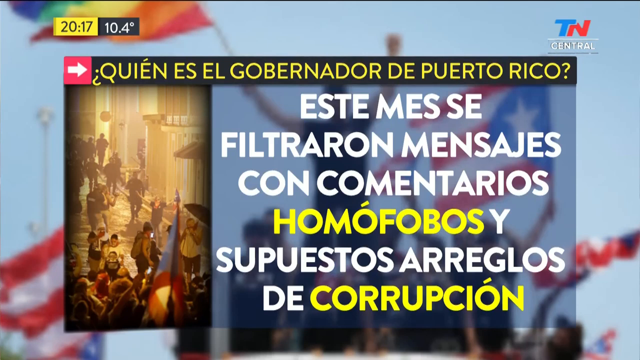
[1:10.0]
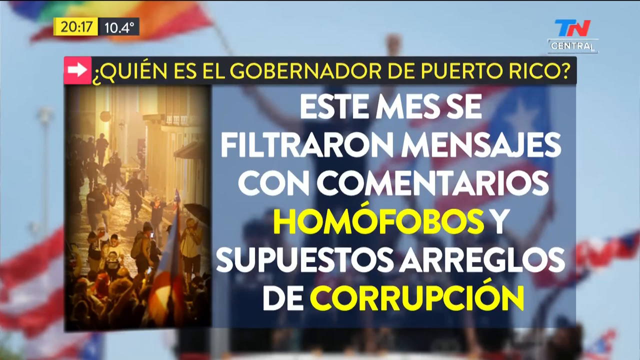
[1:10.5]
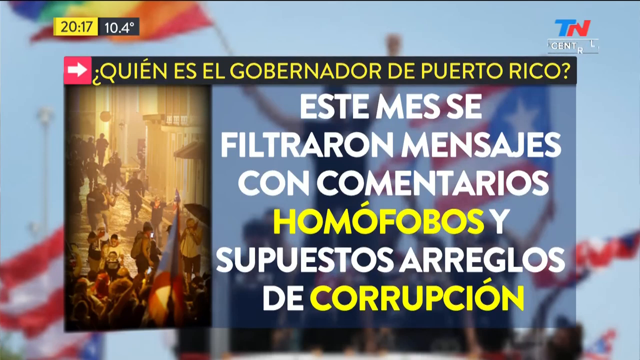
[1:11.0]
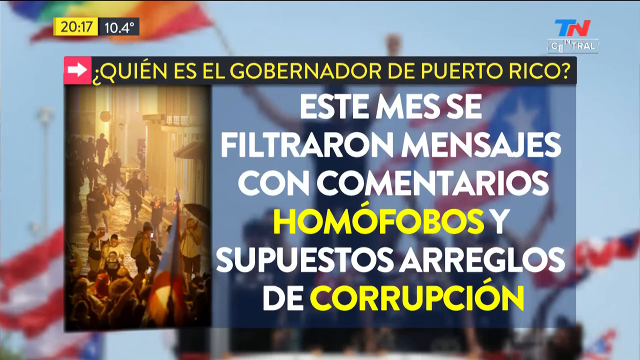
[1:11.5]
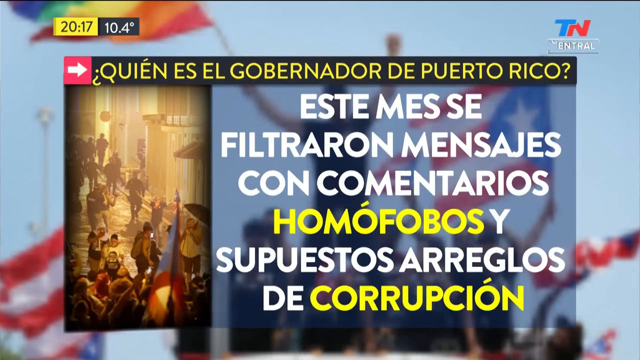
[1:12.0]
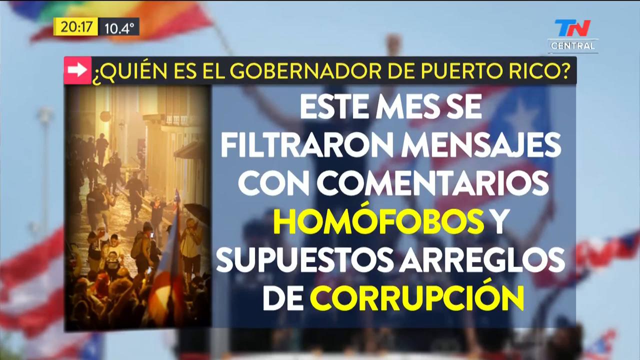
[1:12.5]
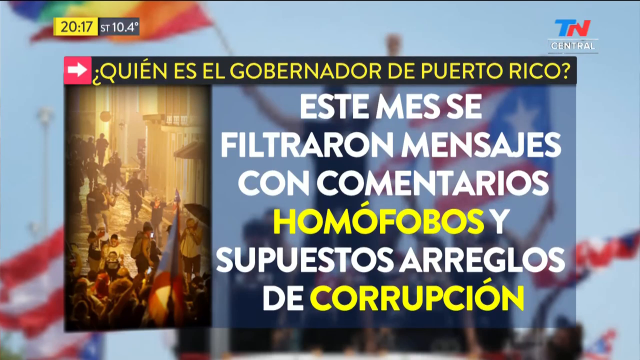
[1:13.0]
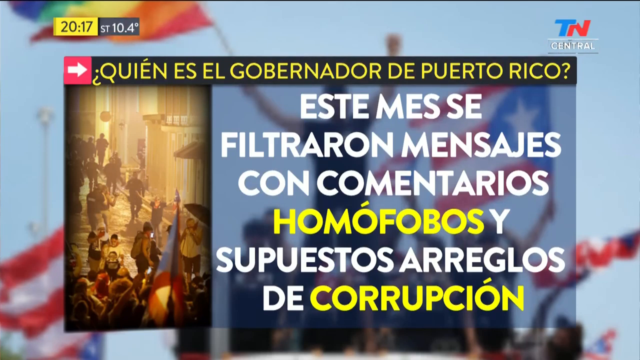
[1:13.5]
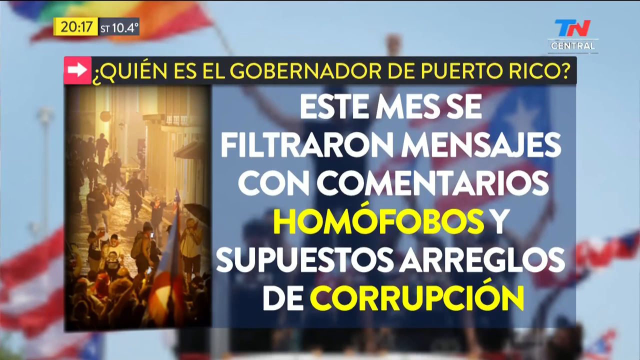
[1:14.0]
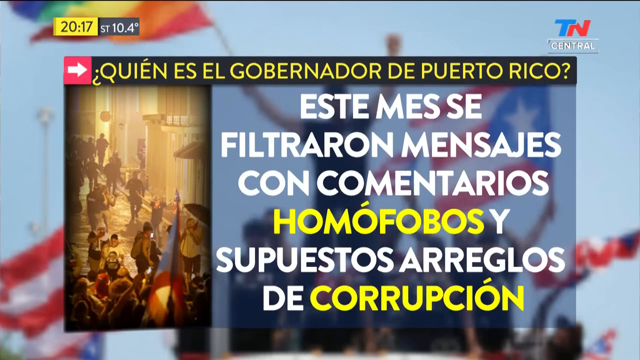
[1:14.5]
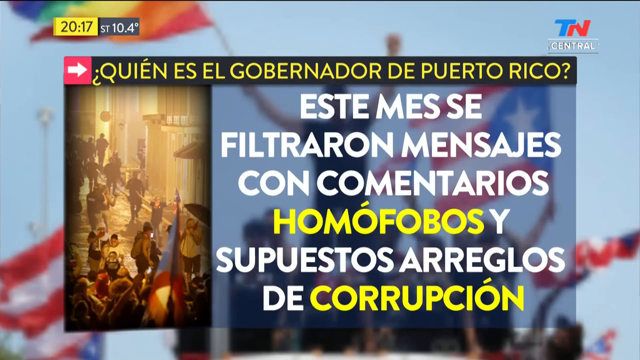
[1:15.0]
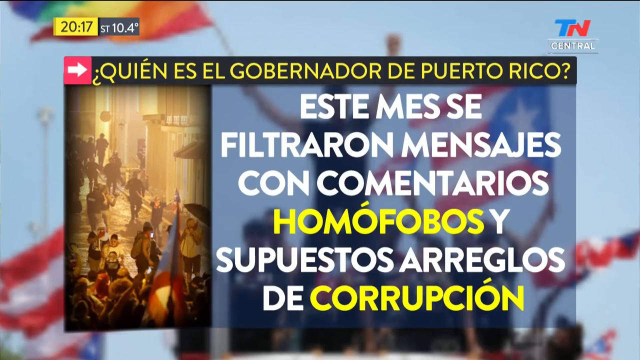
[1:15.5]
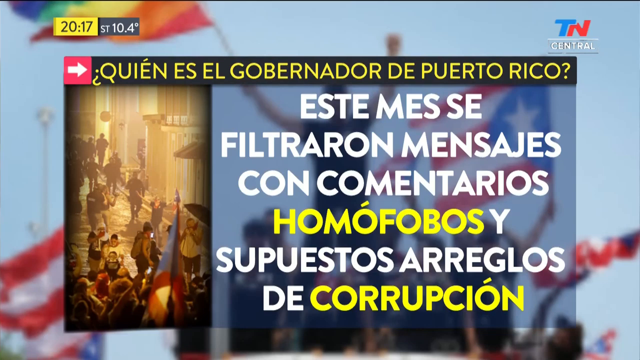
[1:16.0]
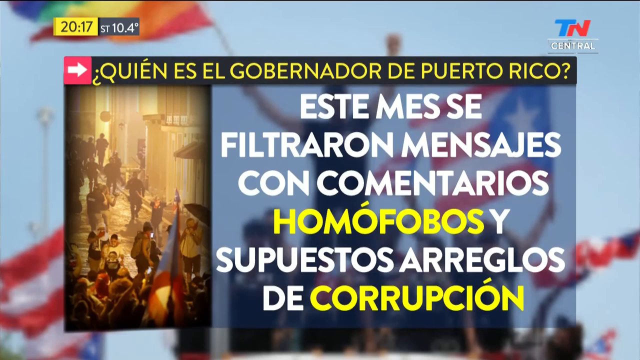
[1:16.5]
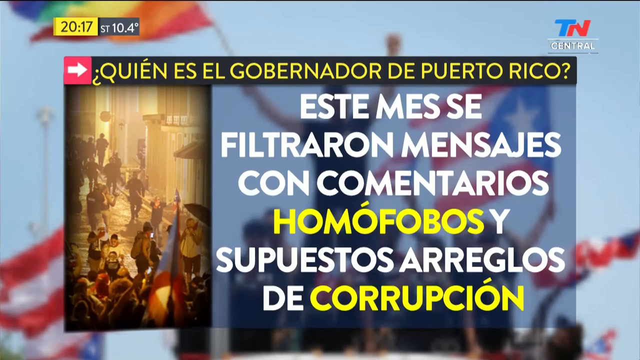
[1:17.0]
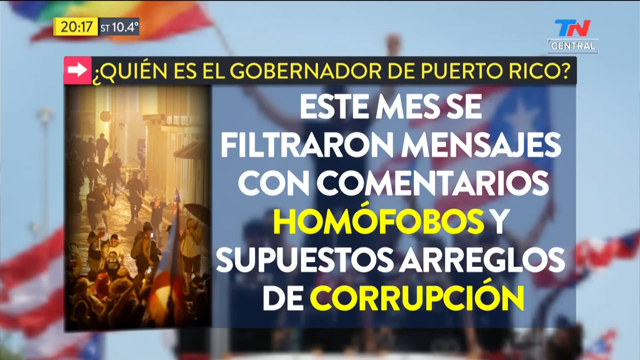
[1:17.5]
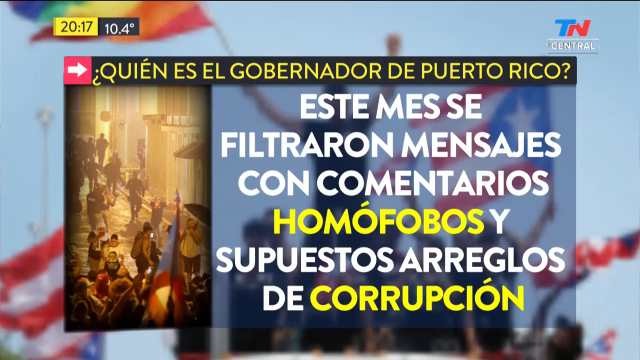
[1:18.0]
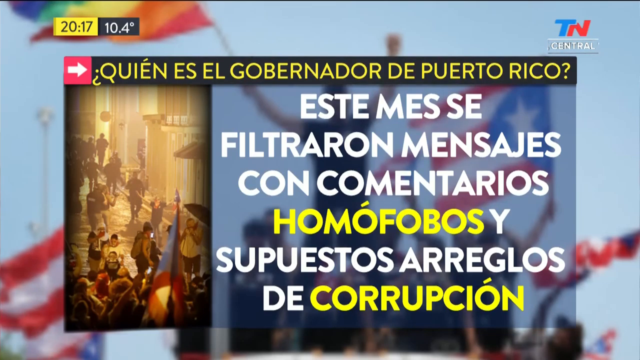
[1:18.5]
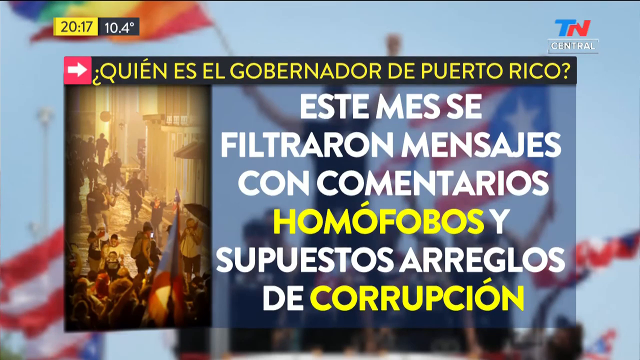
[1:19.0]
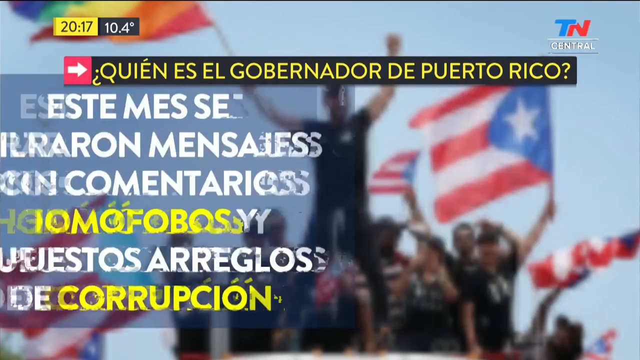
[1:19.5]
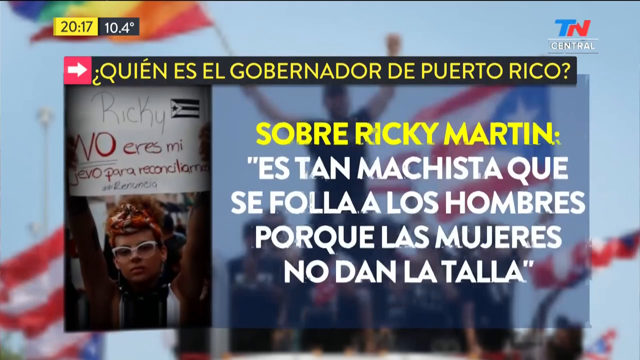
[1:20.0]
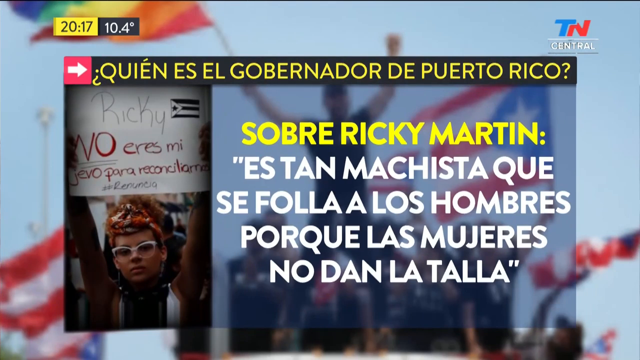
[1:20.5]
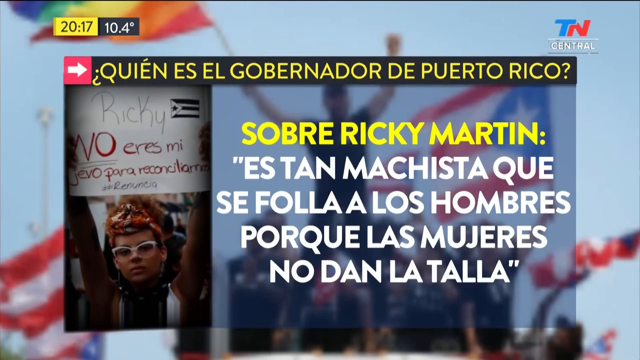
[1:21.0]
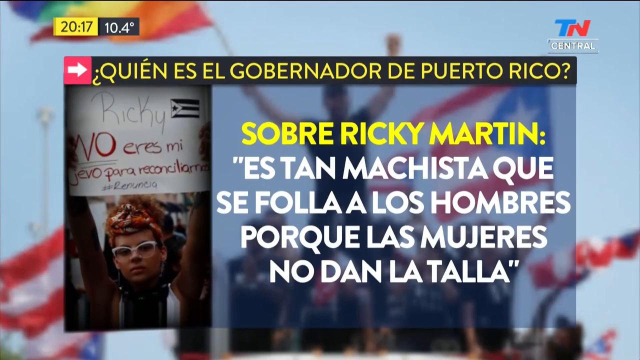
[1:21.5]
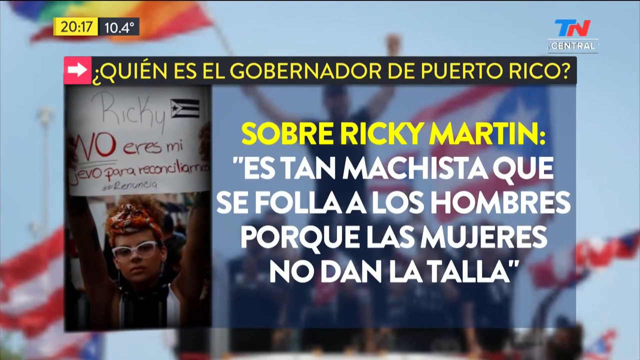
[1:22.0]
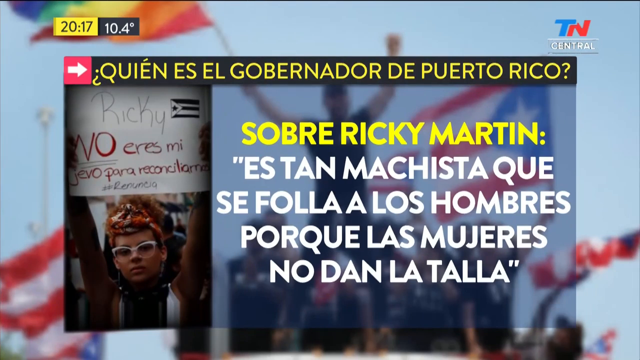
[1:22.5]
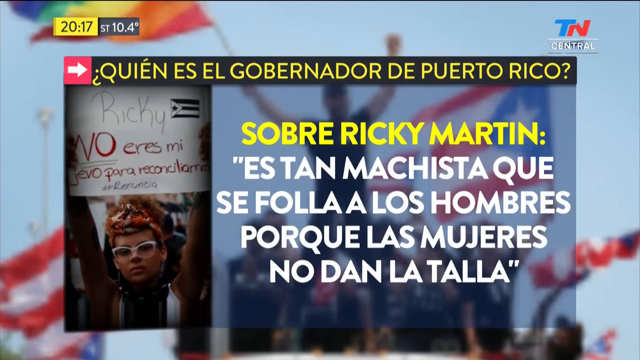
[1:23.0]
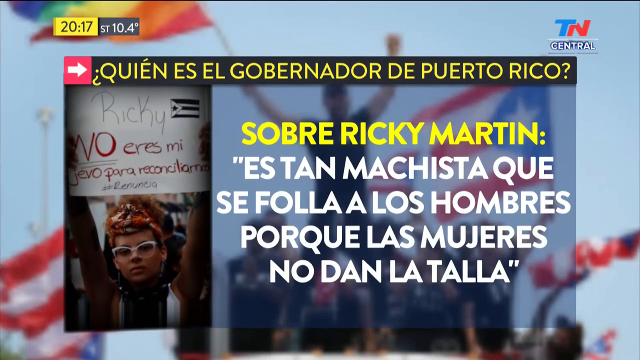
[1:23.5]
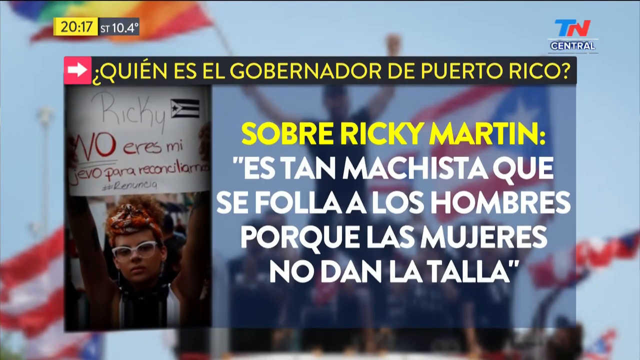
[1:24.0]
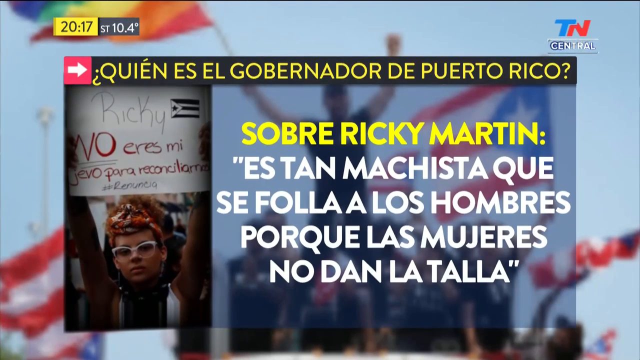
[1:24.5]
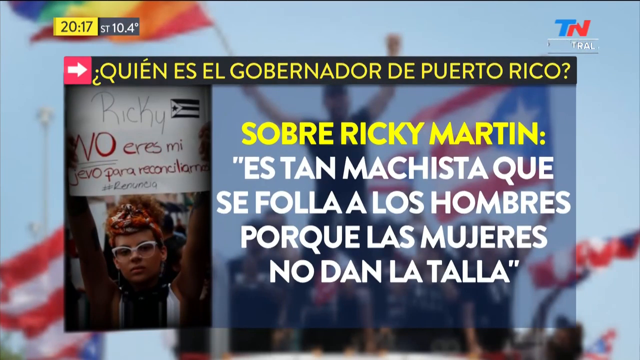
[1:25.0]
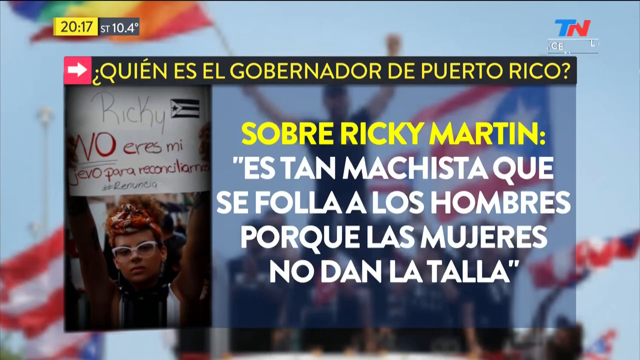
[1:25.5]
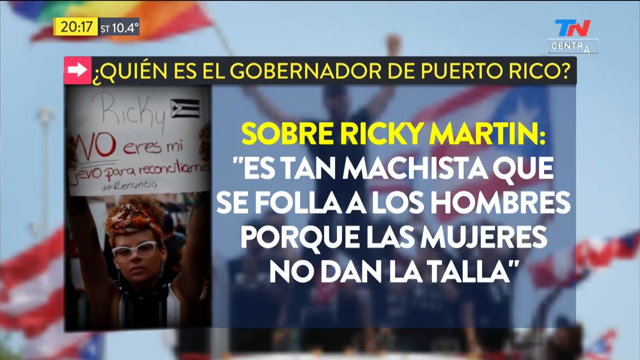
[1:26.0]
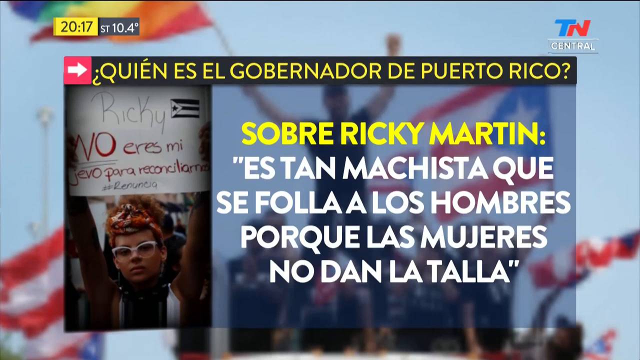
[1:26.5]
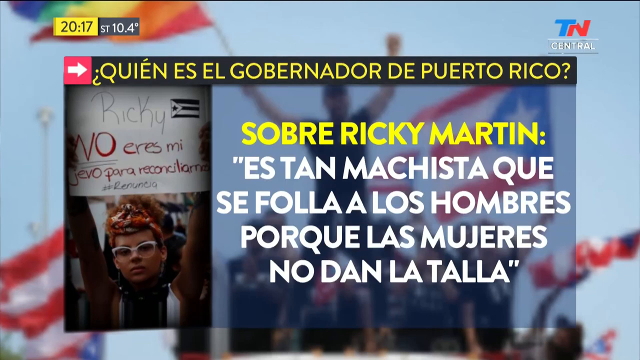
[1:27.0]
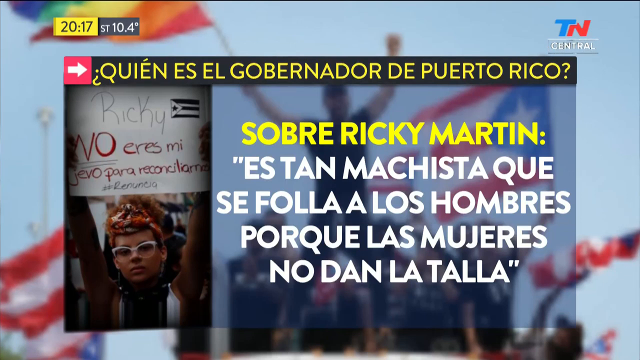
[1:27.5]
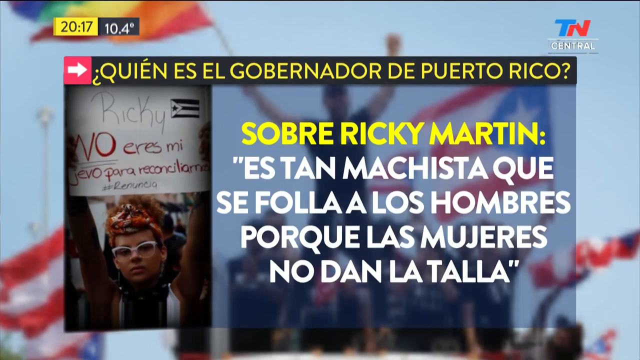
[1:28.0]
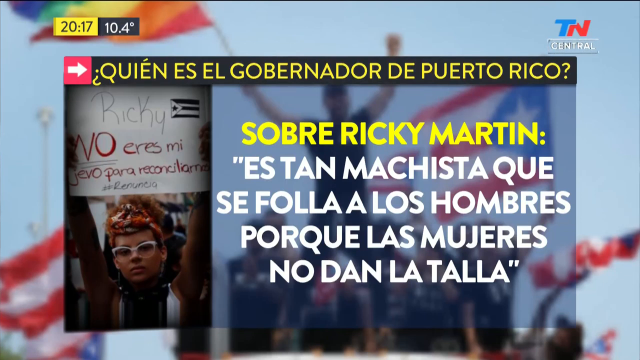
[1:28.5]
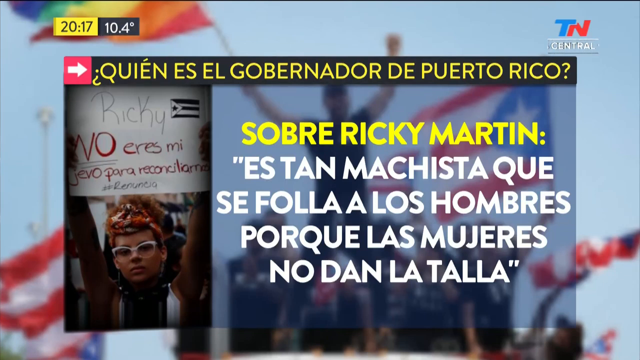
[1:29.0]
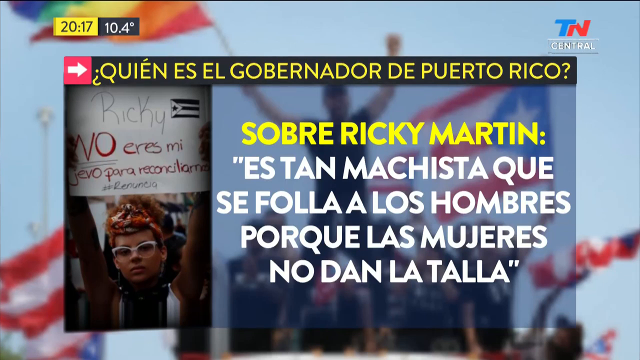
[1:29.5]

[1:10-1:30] The footage is apparently from TN Central. What seems to be a protest is underway, with soldiers or army troops coming from behind the protesters. A lady wearing glasses and a shade is tying a scarf and raising her banner up, holding it high in her hands.